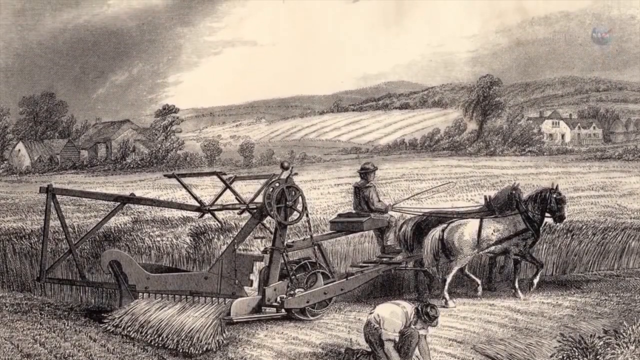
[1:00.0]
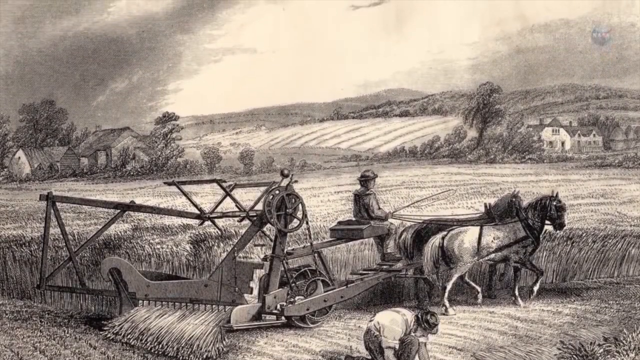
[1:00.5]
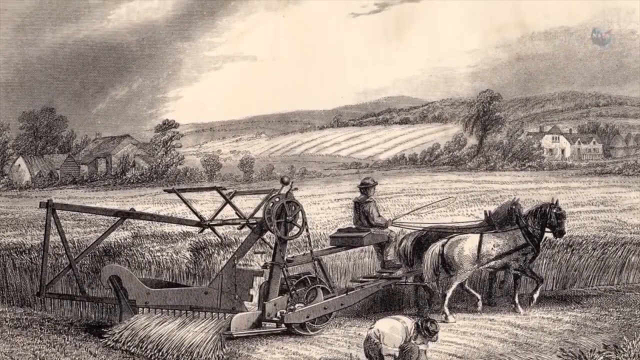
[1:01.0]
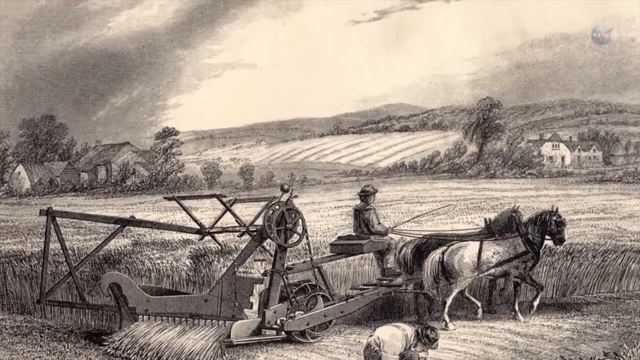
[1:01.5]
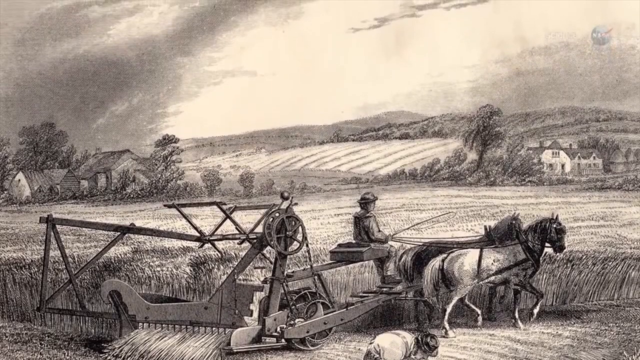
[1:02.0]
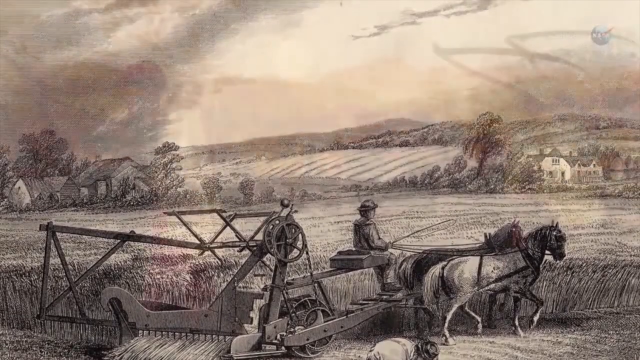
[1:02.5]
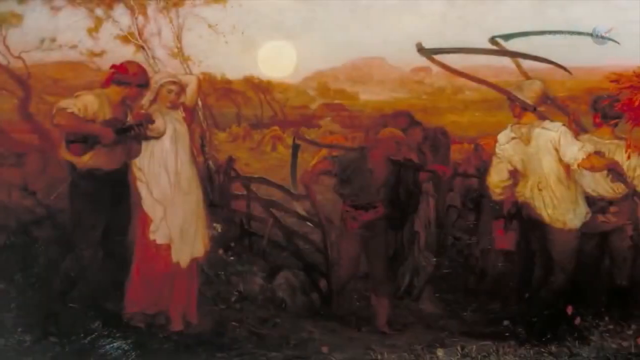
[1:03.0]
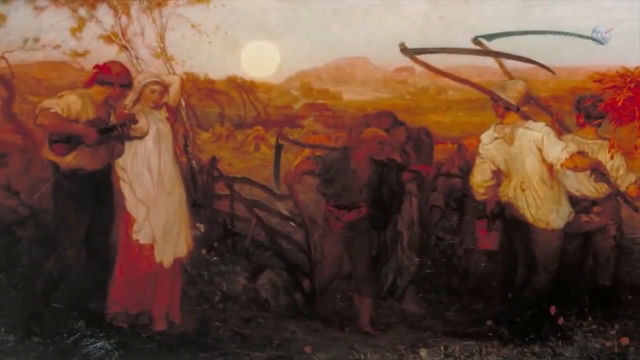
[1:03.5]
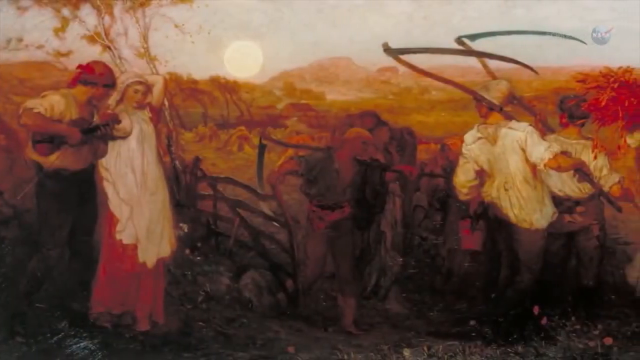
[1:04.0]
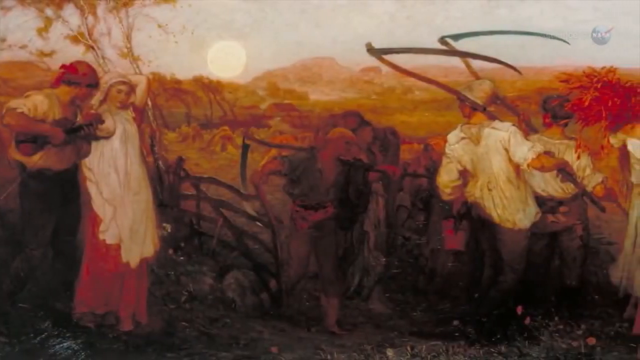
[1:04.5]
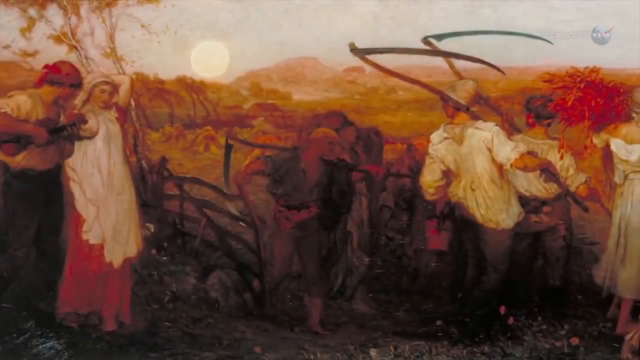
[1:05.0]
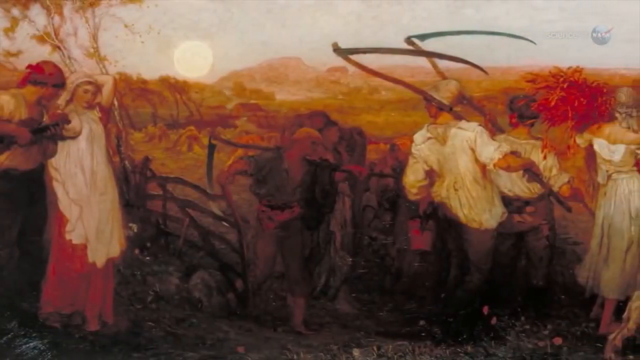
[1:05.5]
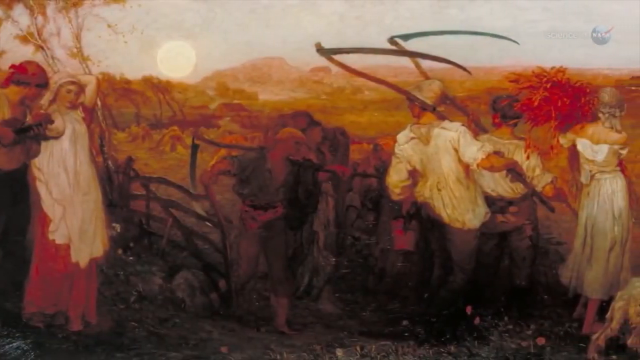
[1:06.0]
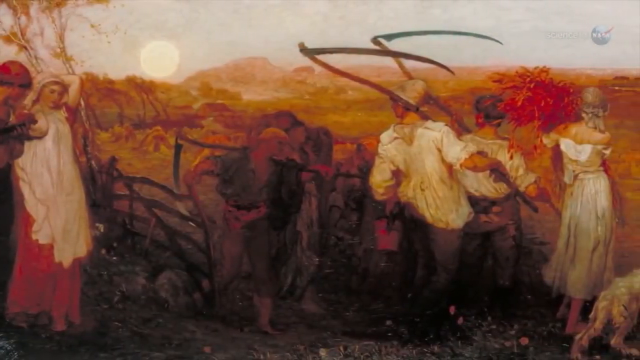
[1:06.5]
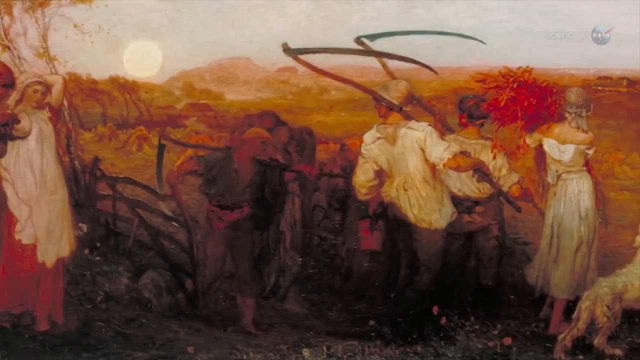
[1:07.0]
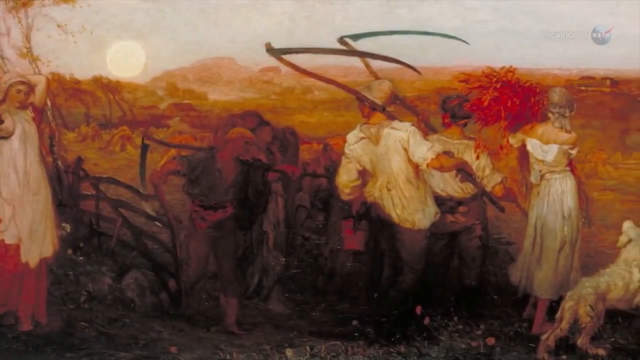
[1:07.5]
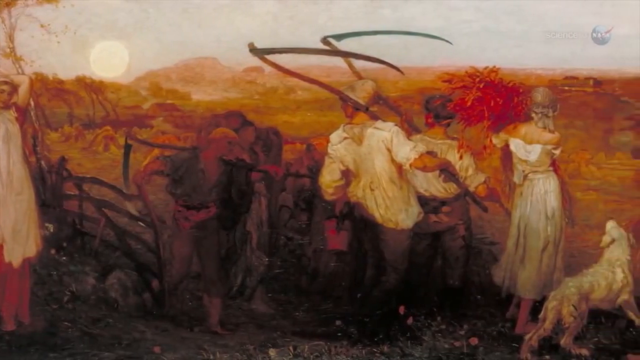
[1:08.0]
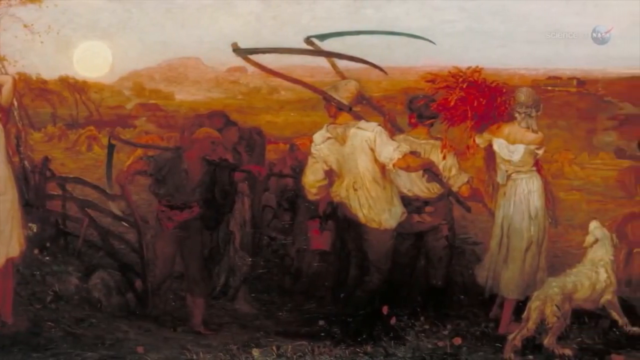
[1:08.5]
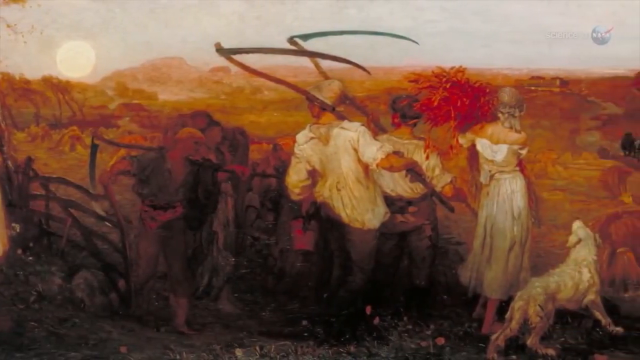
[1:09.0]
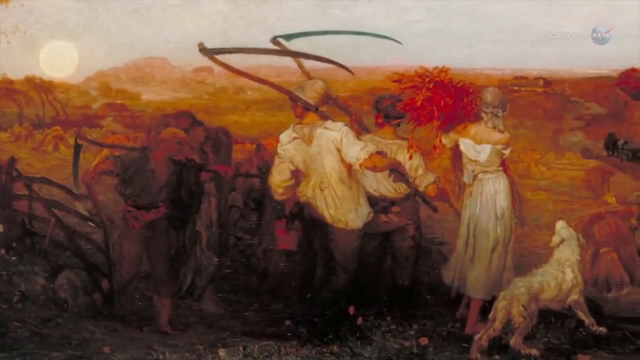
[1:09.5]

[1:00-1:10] The black and white painting or sketch of the farmer continues, showing farming equipment pulled through a field by two horses. The view pans upward and then cuts to another painting, moving from left to right. It shows a few people, men and women, holding or carrying different things; a couple of the men look like they are carrying scythes for cutting hay. A white dog is visible.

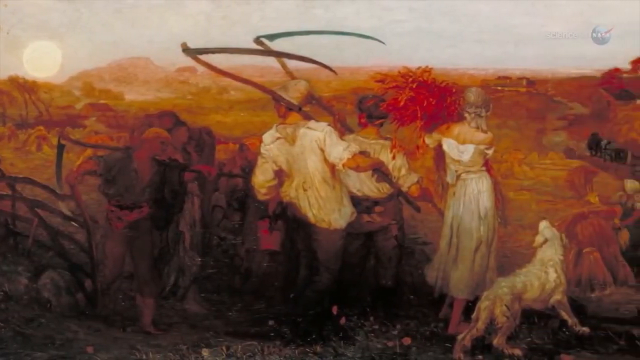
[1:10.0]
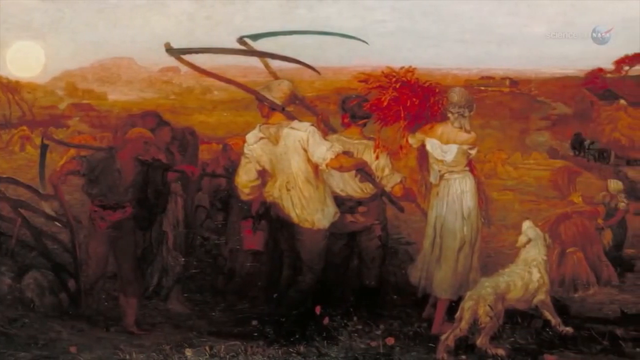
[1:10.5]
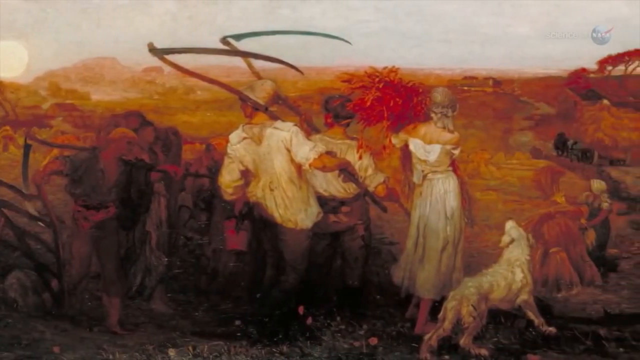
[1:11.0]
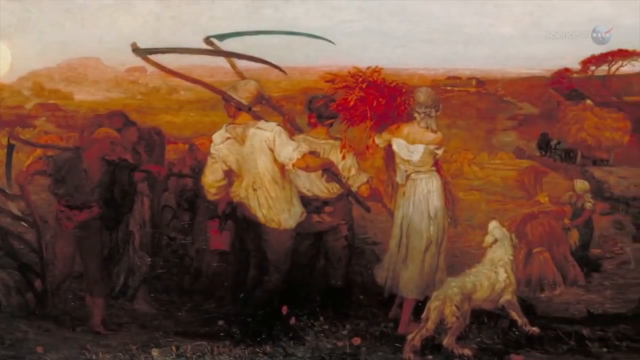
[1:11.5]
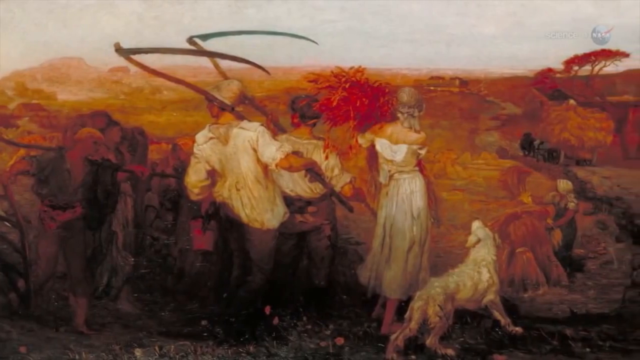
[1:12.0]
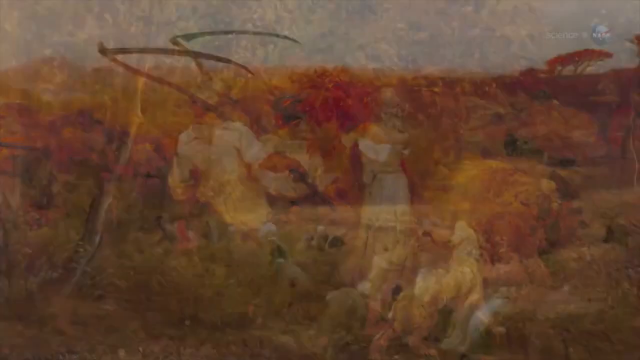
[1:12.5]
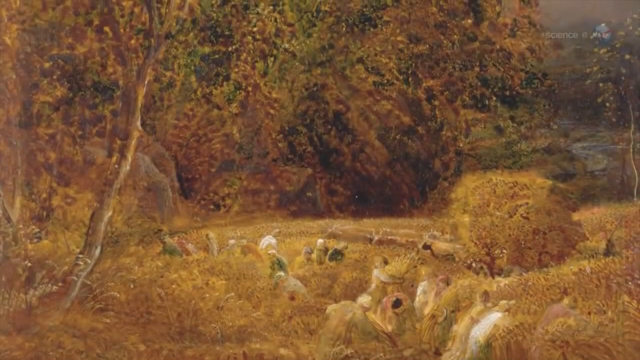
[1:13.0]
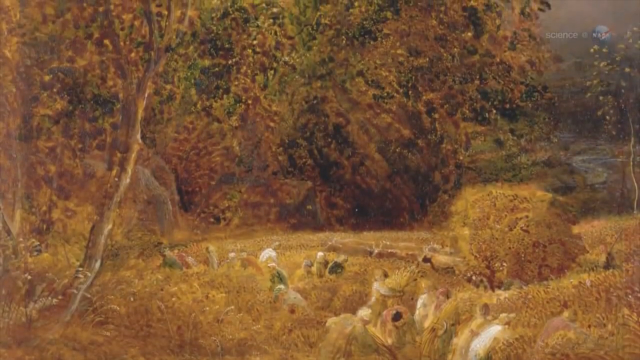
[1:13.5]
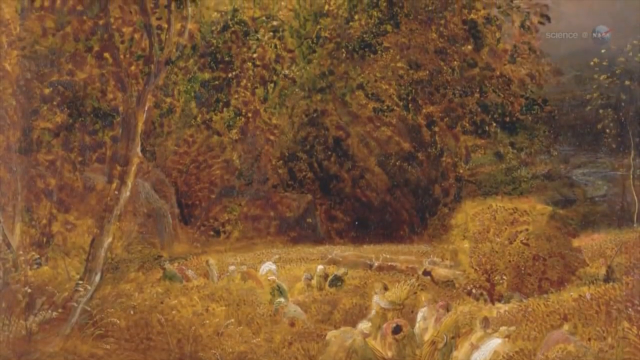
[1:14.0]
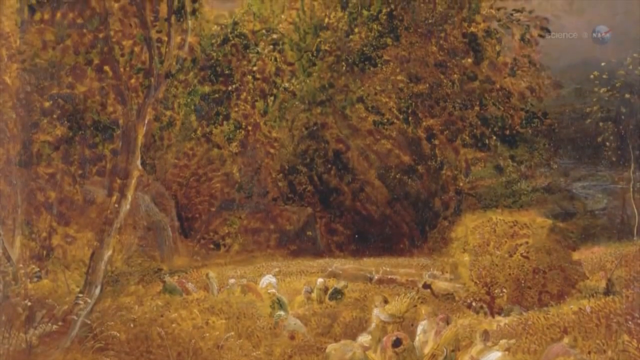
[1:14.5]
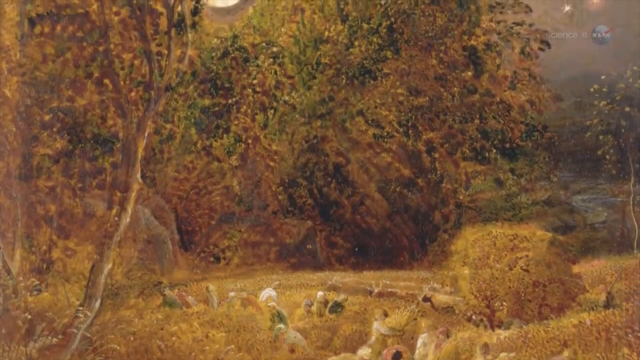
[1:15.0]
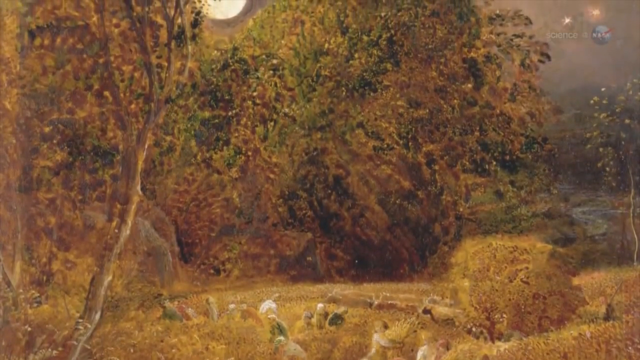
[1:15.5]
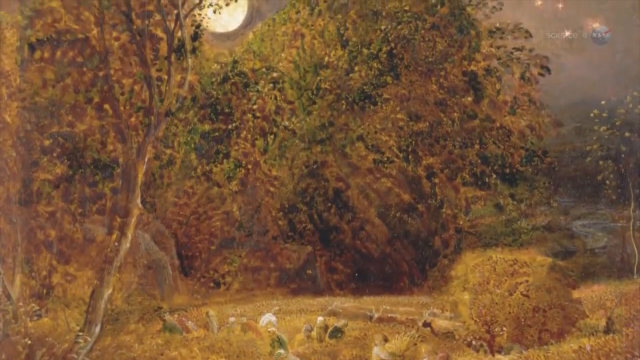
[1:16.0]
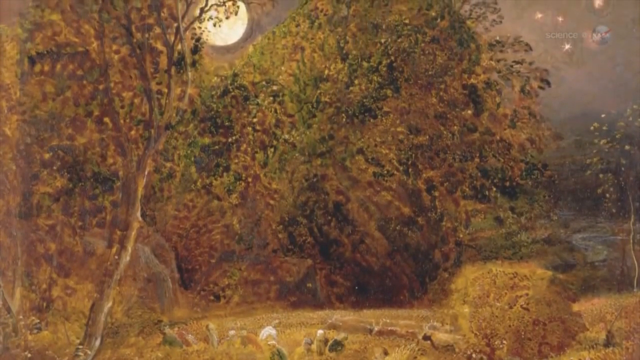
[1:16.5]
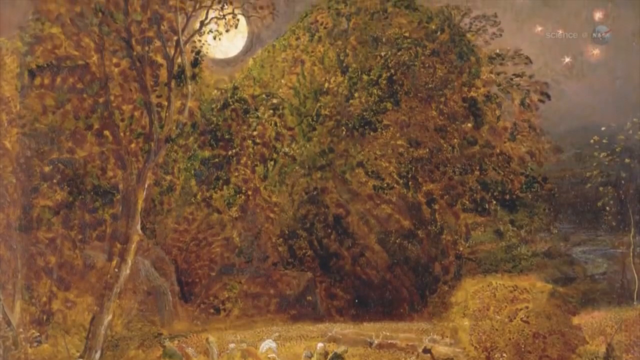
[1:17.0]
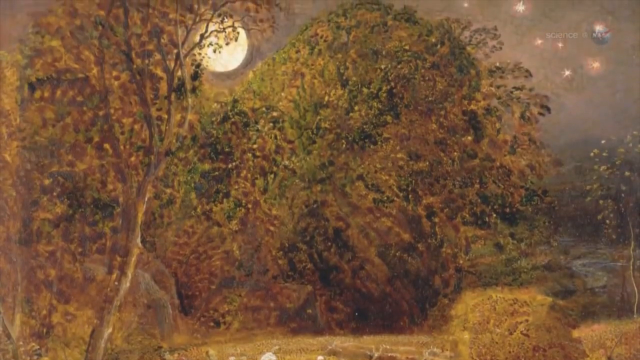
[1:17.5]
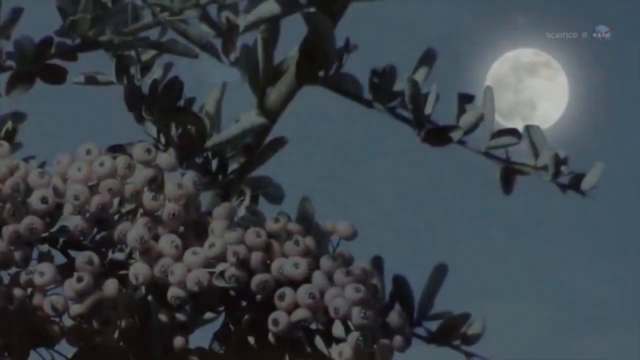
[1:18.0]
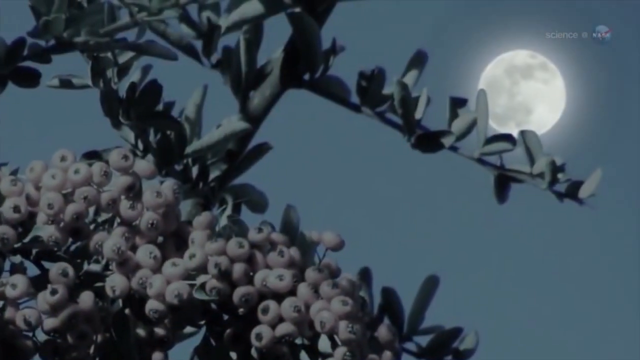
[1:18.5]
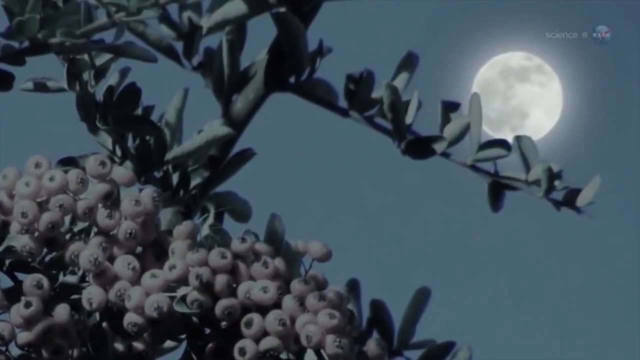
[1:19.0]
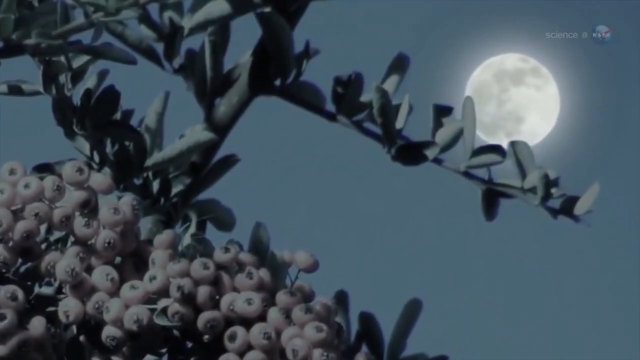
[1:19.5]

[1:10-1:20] The painting of people standing in what looks like a field is still shown; a couple of them carry scythes and wear white clothing, and there is a white dog. It transitions to what looks like the edge of a forest in a green field, also a painting. The view pans upward toward the sky, revealing a full moon. At the end, a very close-up image shows what looks like tree branches with some kind of fruit, maybe grapes, clustered in the bottom left corner. The sky has a bluish hue, and a bright full moon is in the top right corner as the view zooms in on it.